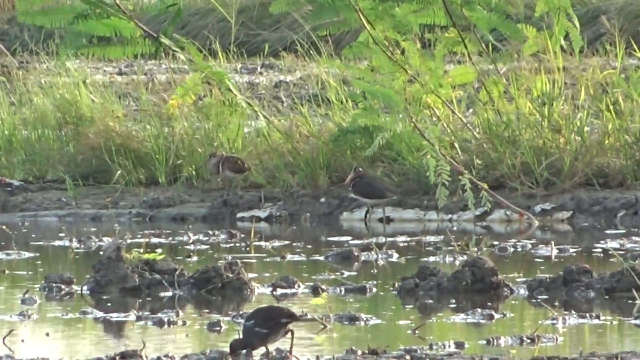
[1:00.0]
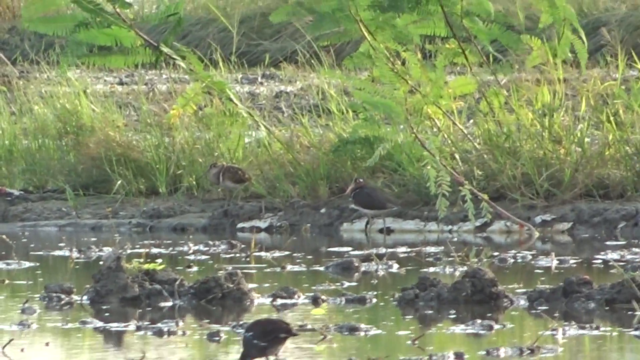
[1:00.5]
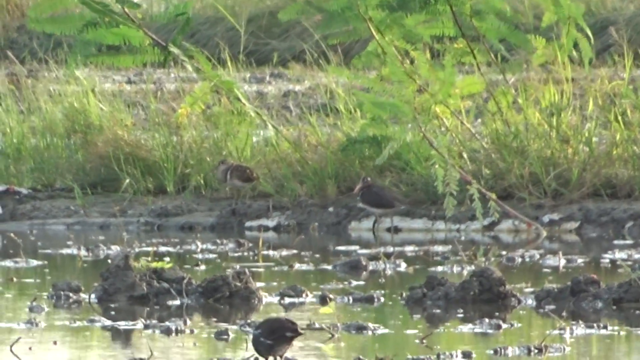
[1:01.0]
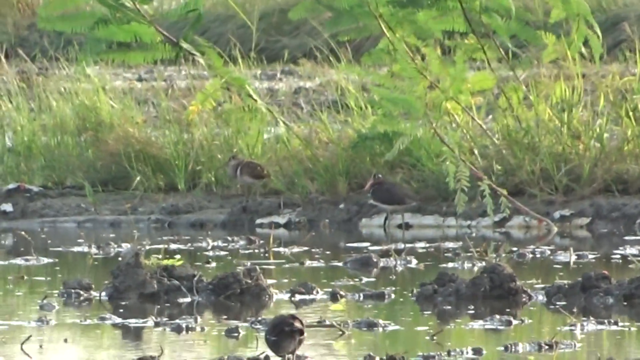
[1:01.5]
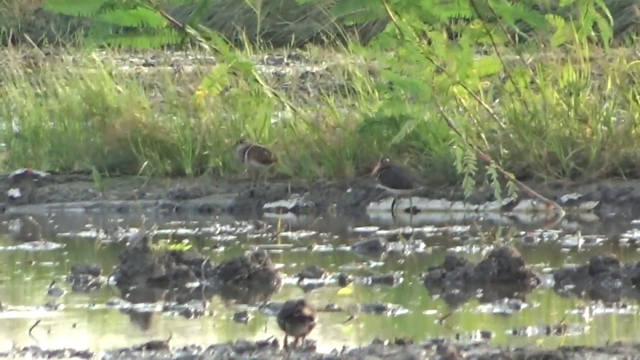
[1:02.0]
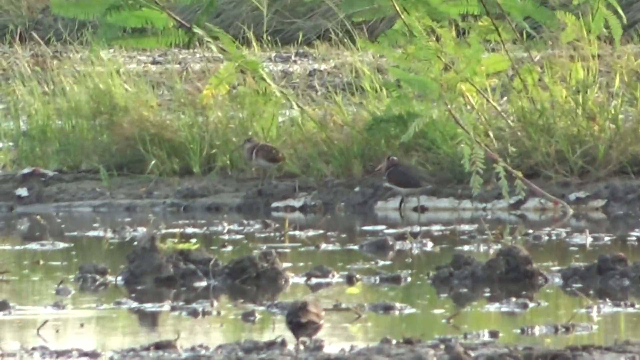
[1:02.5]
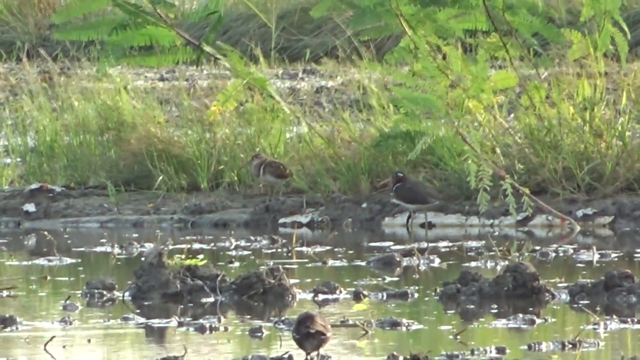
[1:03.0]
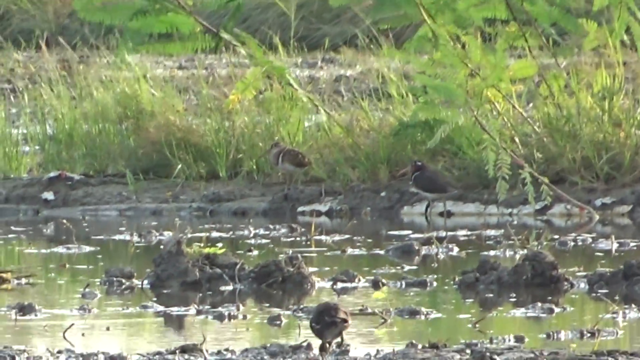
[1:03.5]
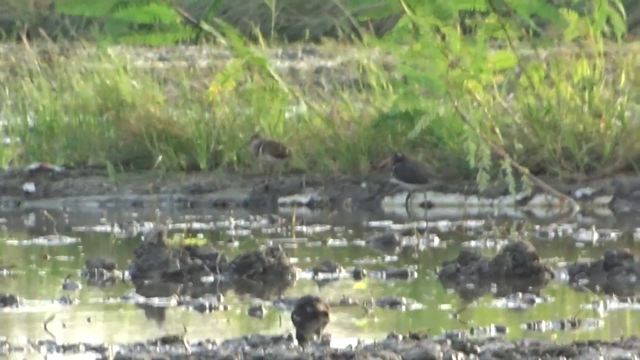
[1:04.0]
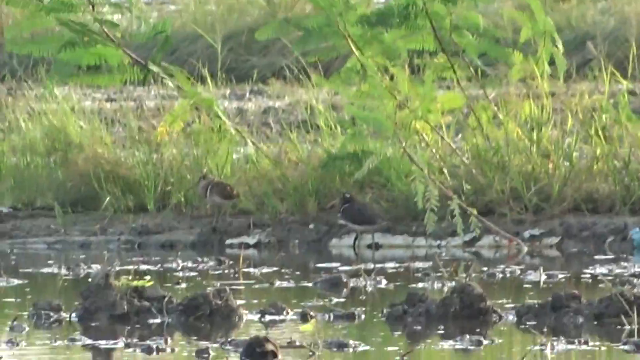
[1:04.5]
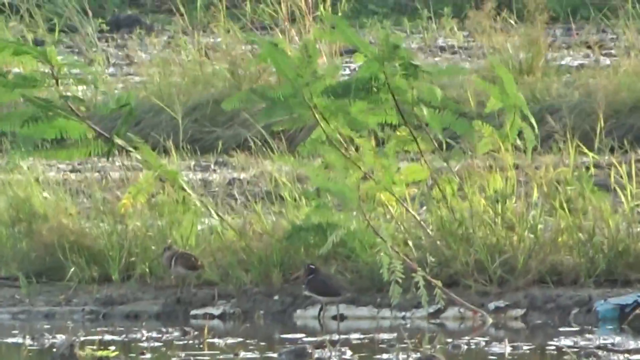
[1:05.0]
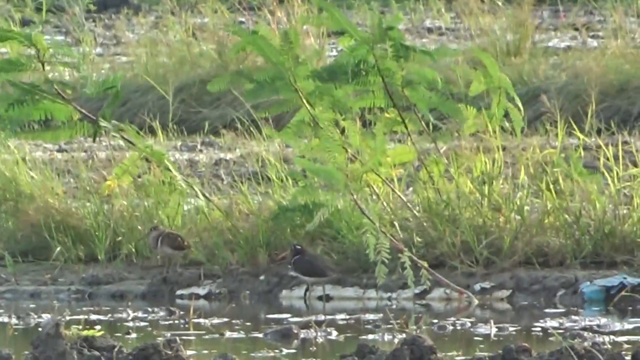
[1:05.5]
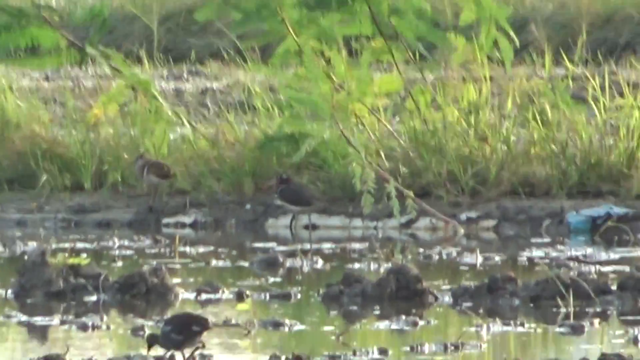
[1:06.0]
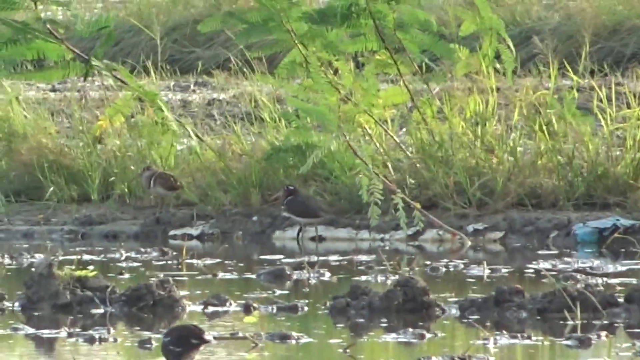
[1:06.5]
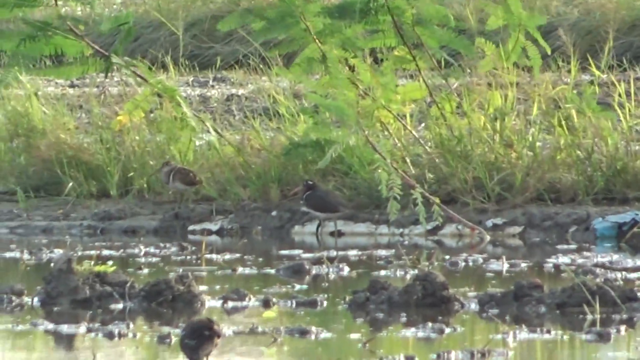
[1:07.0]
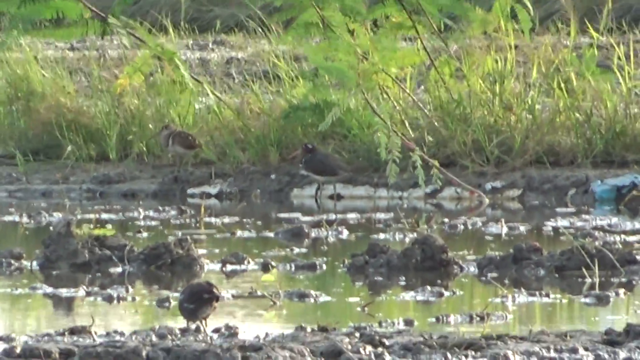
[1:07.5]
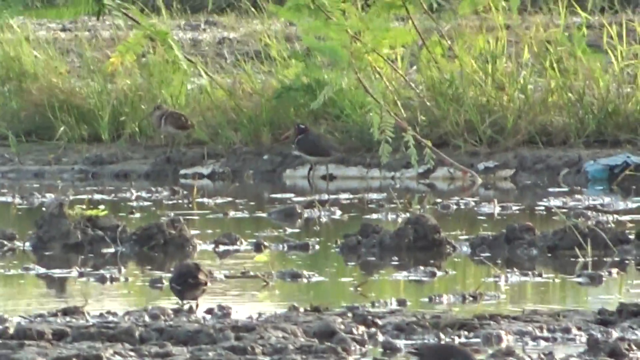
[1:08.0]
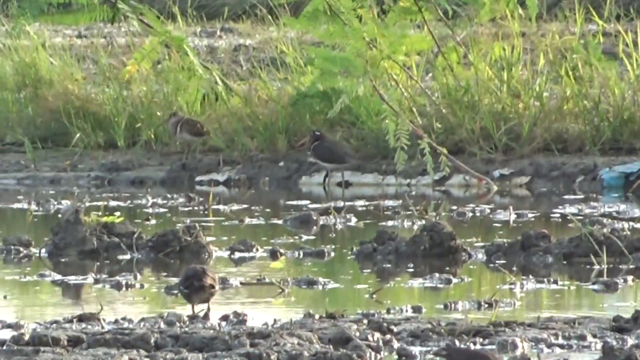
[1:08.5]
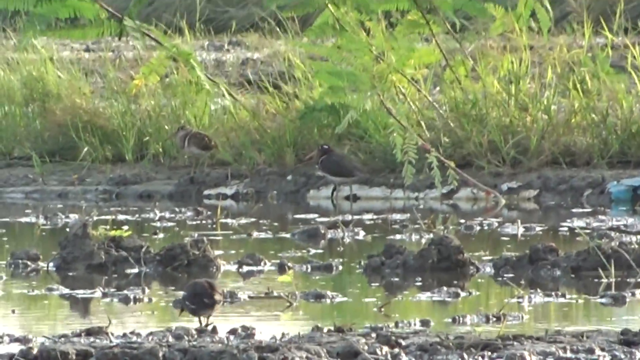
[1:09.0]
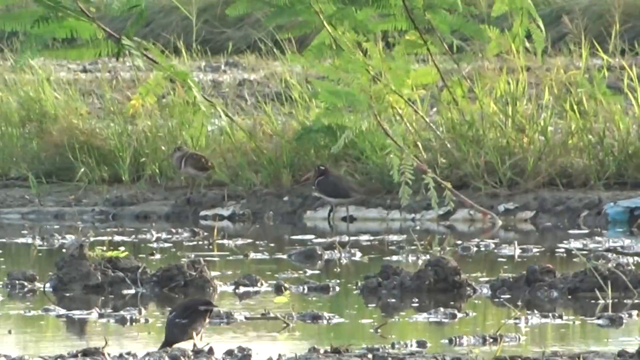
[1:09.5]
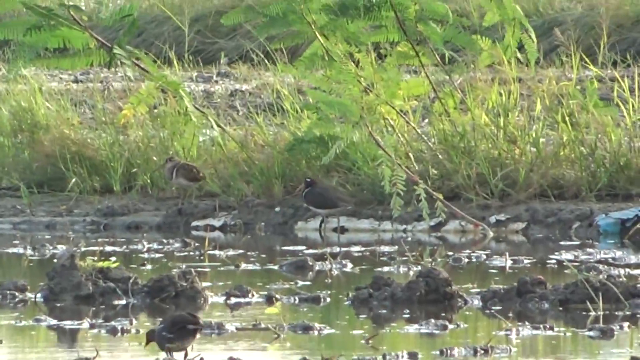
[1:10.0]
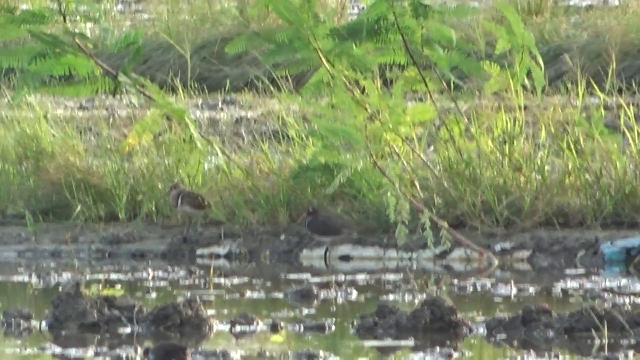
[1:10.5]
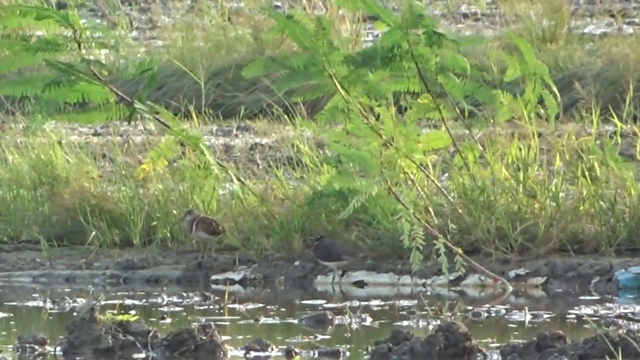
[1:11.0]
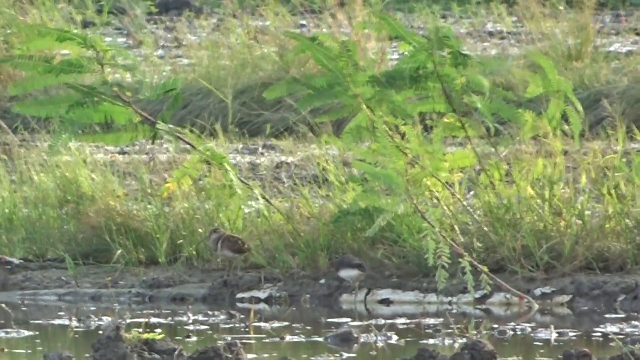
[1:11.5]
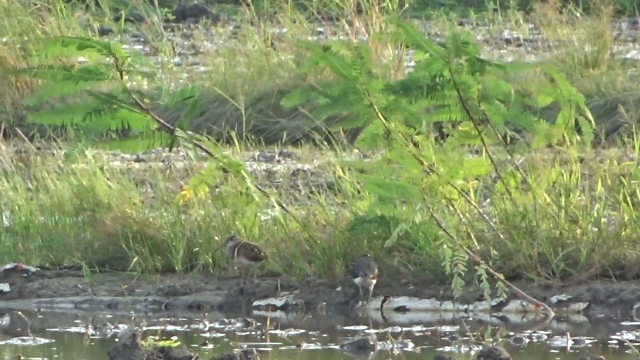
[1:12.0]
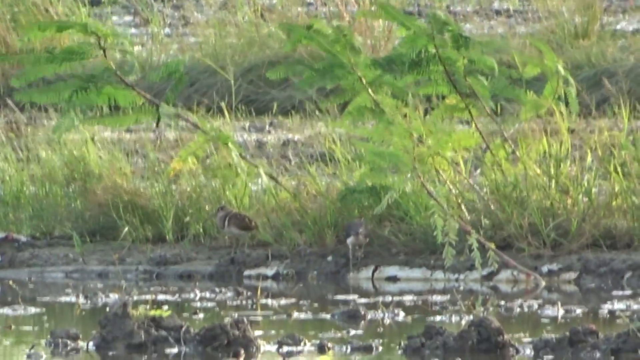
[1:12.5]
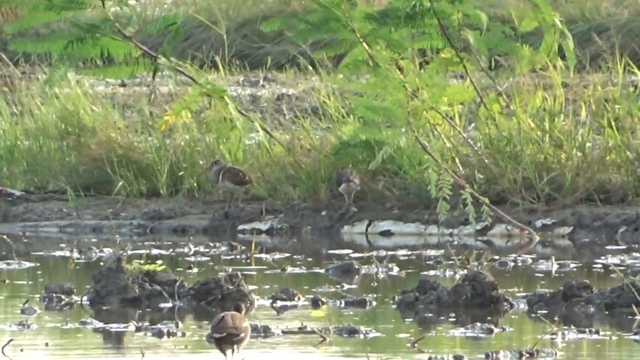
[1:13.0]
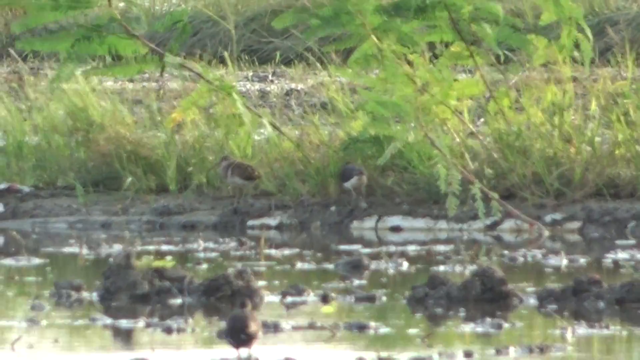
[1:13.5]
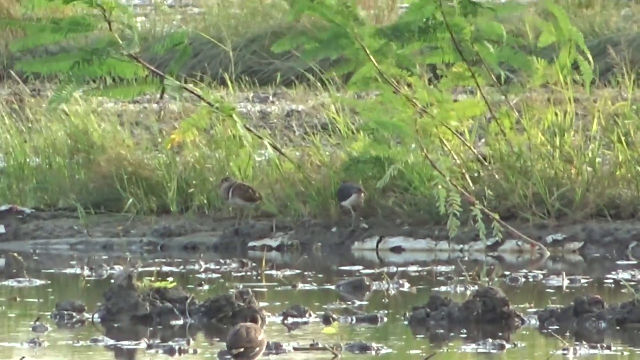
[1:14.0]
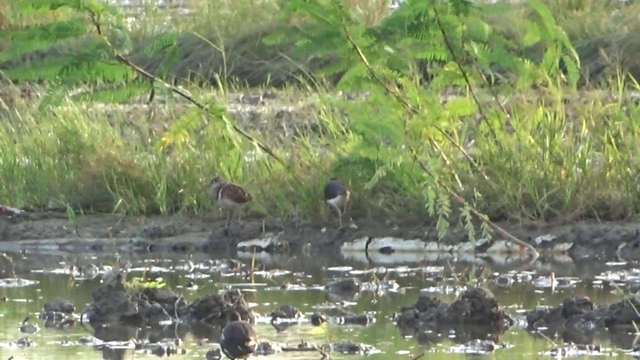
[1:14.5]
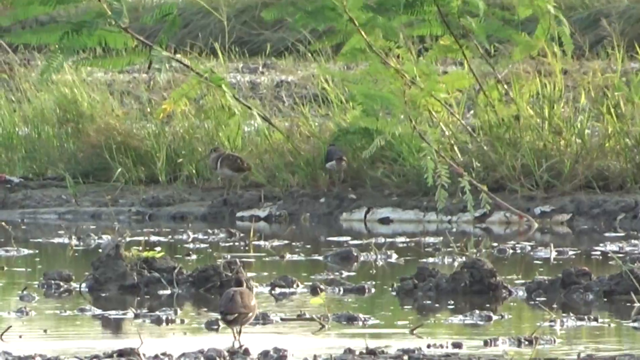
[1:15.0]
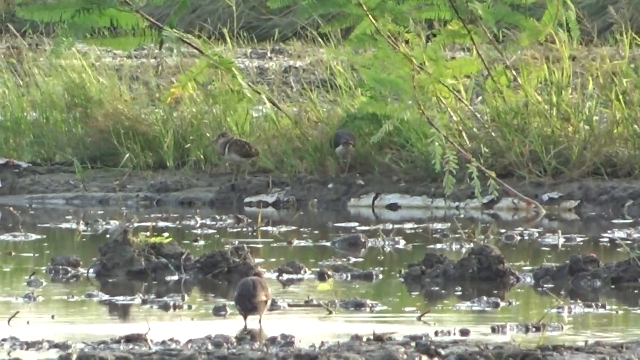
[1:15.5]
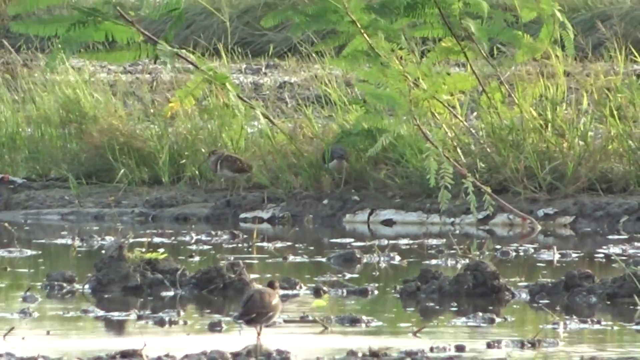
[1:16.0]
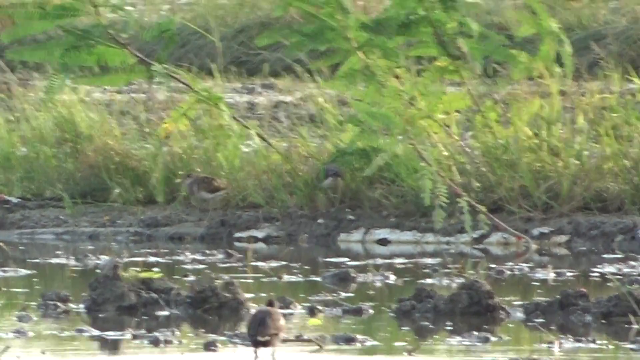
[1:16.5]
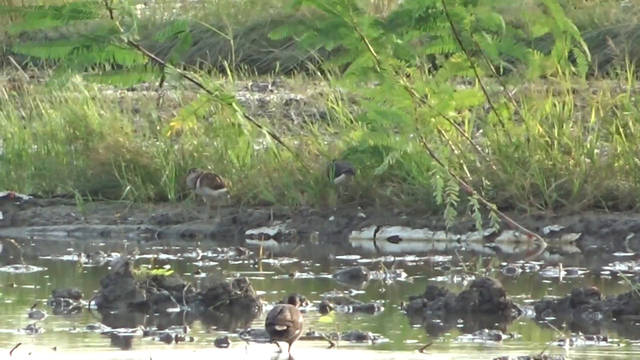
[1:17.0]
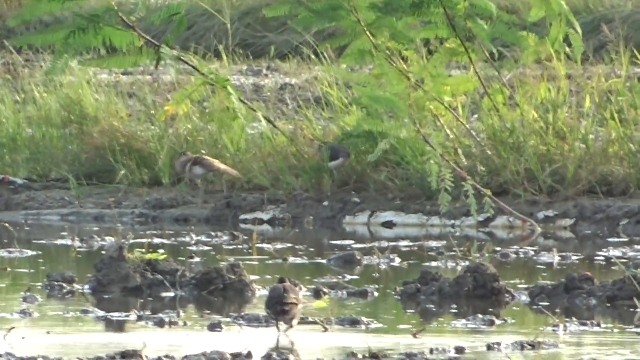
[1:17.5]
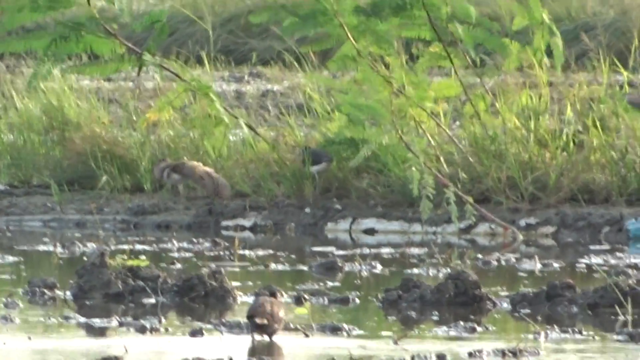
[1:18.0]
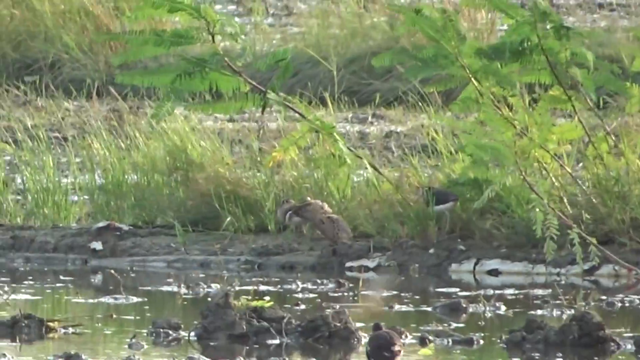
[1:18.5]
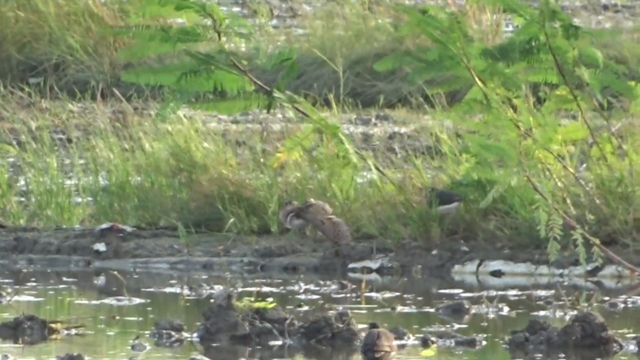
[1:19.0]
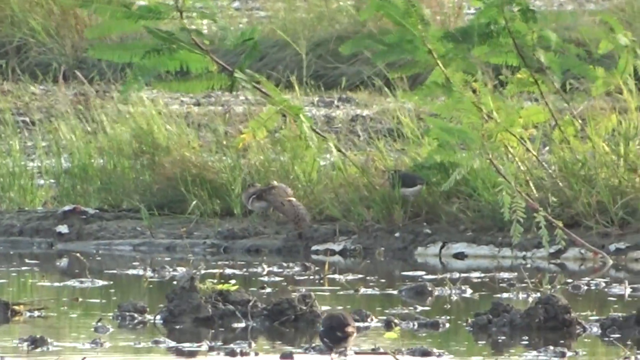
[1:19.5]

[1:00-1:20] Several birds walk in a little swamp area. There are green shrubs, with some dead grass behind them. The wind has picked up, and the green shrubbery and grass blow harder. Behind the green shrubbery, a bird has just flown down; its wings are partly visible between the shrubs as it flaps them, and then it walks around in that area. In the muddy, swampy water, several birds walk around pecking down into the mud and water. Two birds on the edge close to the green shrubs mostly just stand there, walking a little. A little bit of something white, unidentified, is underneath the muddy area. One little bird pecks away at the water and walks. Lots of little birds walk around in the muddy area searching for food. A few twigs move in the wind. A bird flies down and past the swamp area.